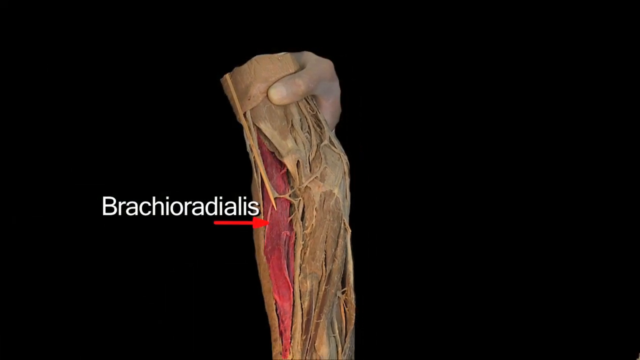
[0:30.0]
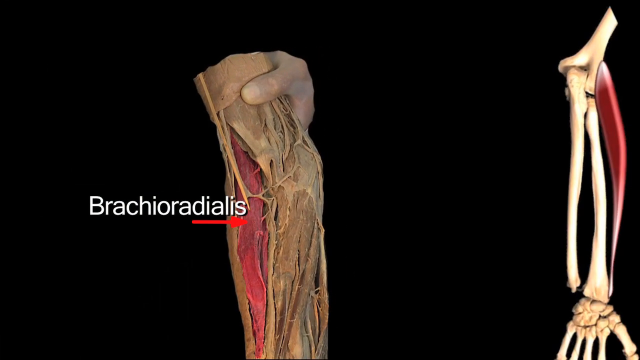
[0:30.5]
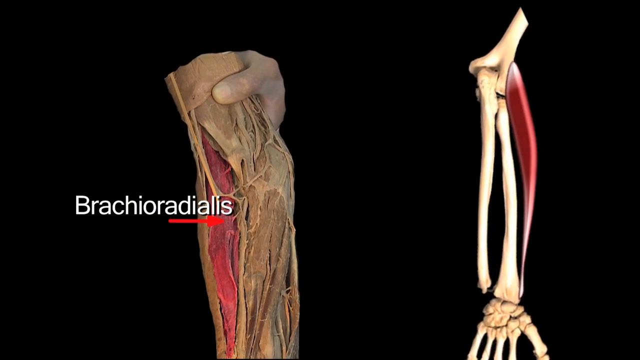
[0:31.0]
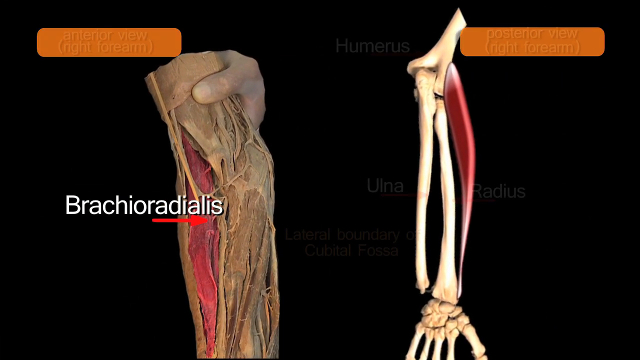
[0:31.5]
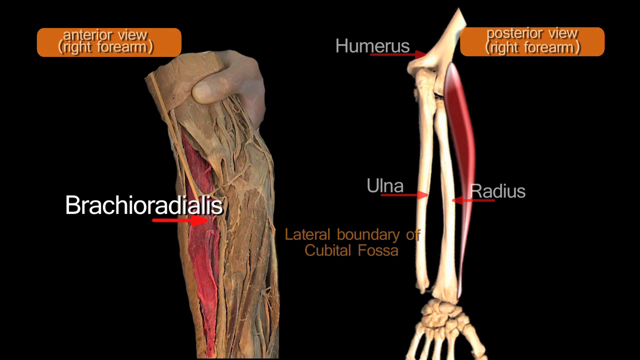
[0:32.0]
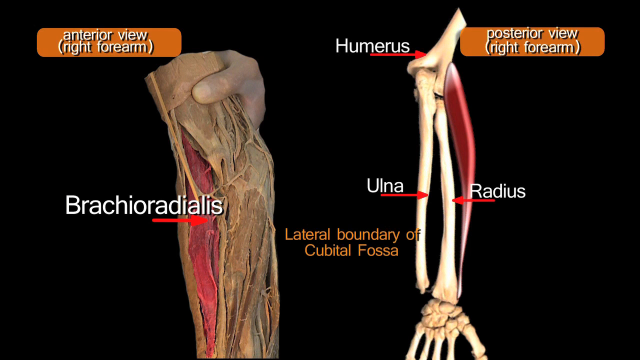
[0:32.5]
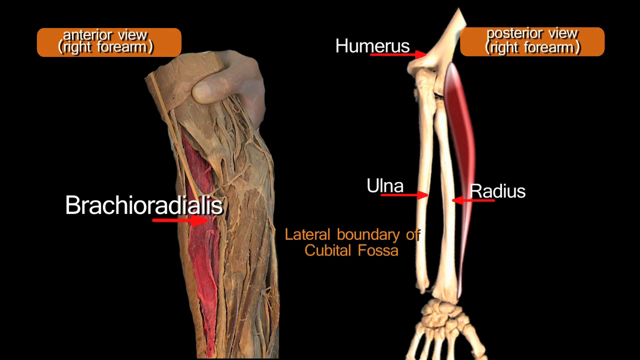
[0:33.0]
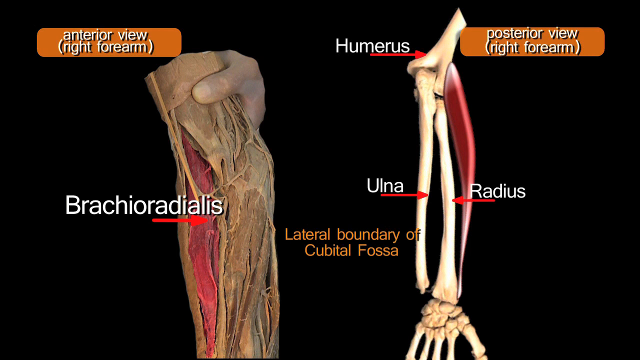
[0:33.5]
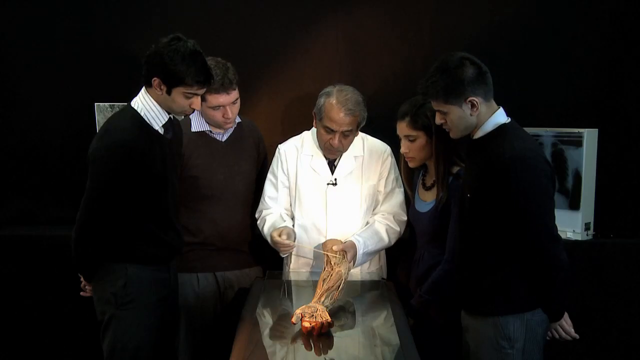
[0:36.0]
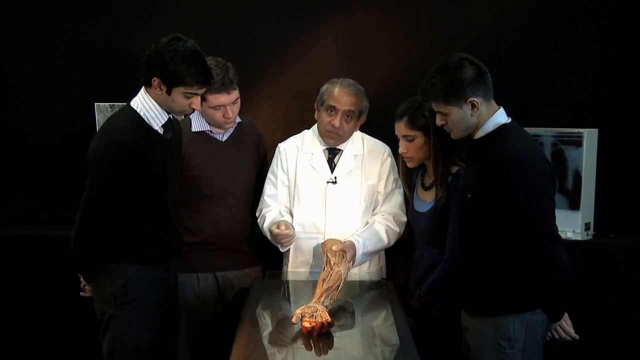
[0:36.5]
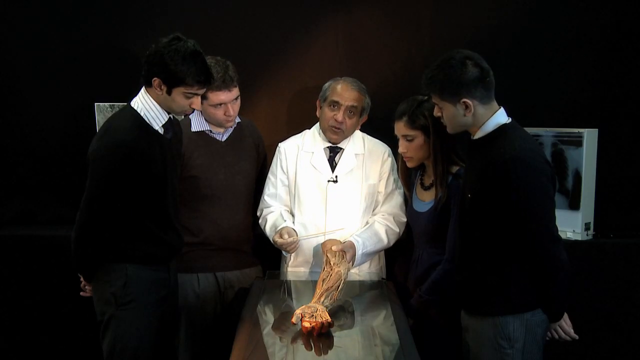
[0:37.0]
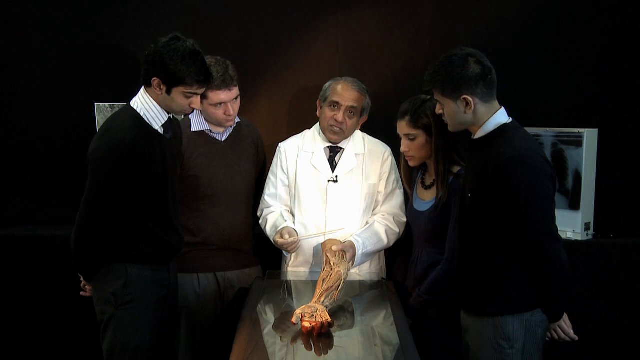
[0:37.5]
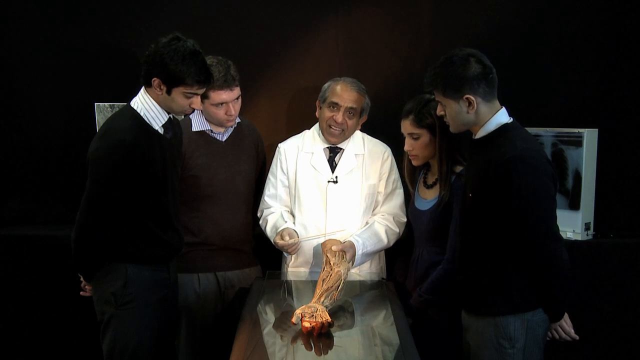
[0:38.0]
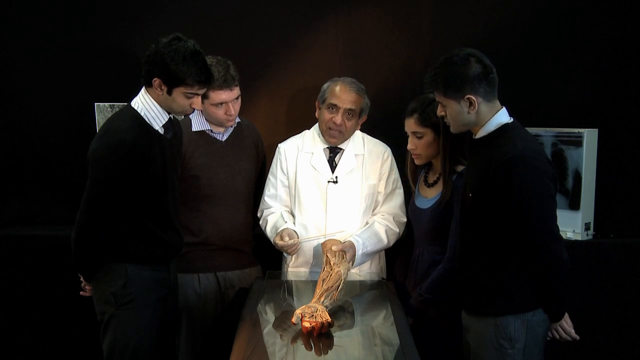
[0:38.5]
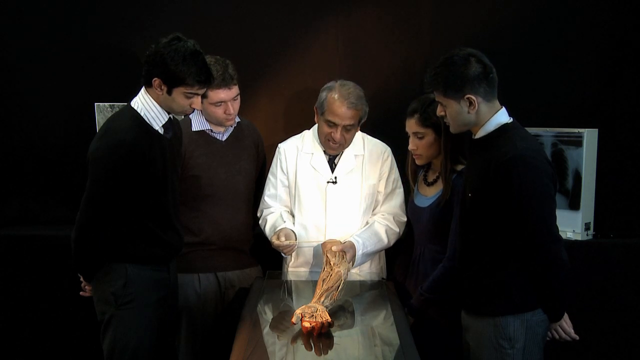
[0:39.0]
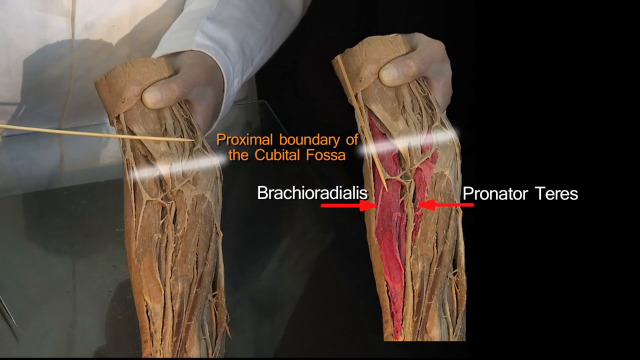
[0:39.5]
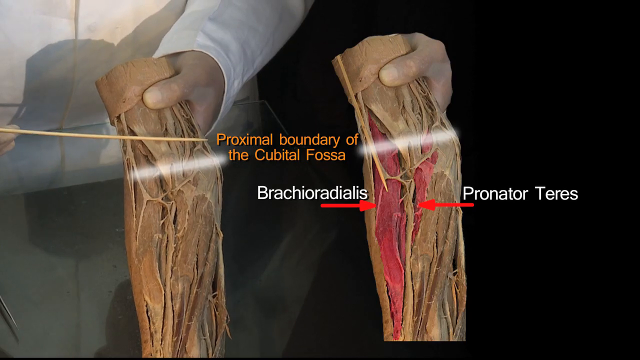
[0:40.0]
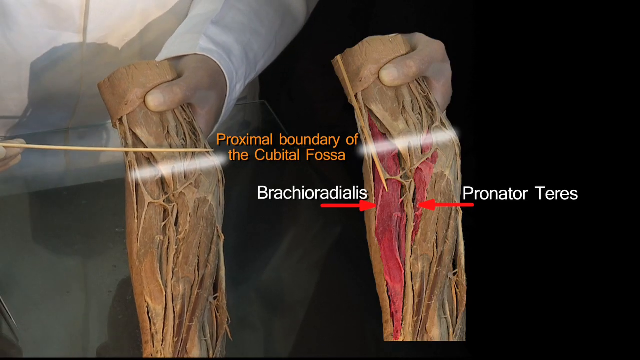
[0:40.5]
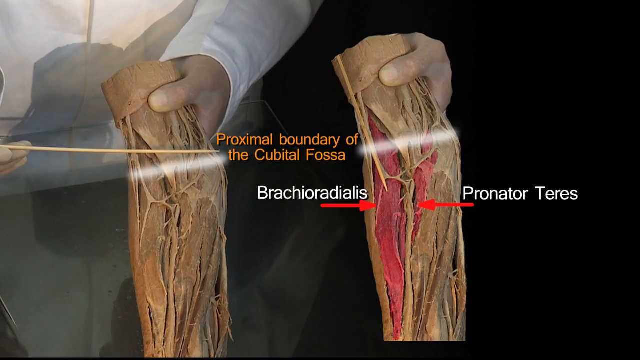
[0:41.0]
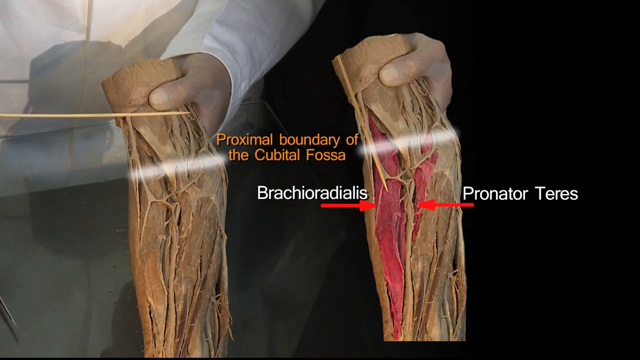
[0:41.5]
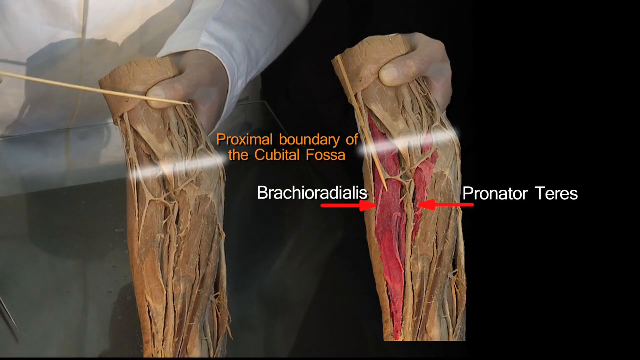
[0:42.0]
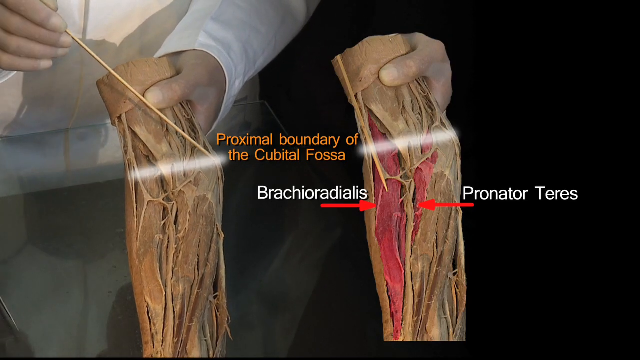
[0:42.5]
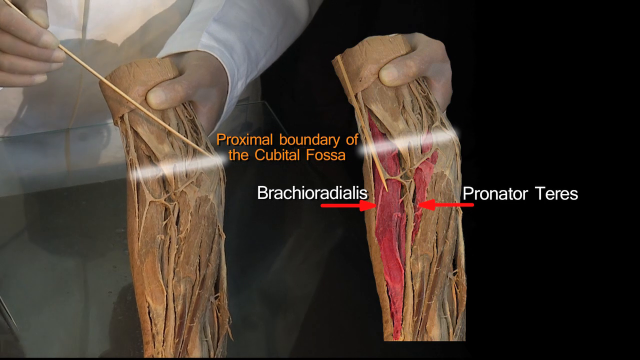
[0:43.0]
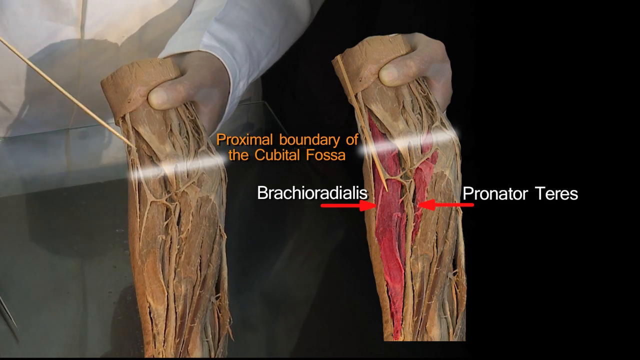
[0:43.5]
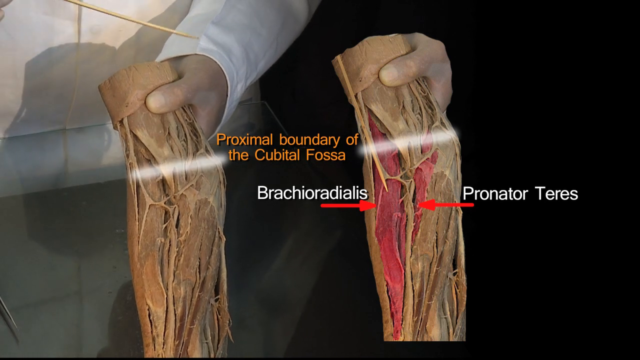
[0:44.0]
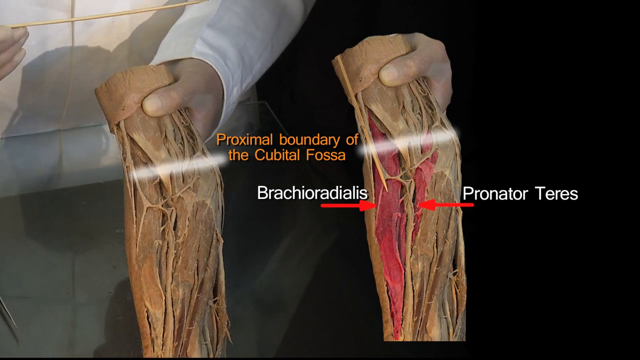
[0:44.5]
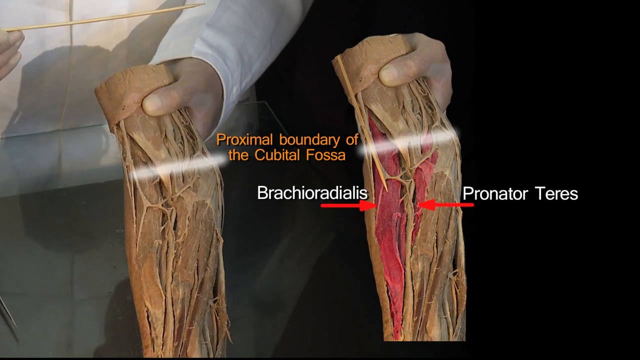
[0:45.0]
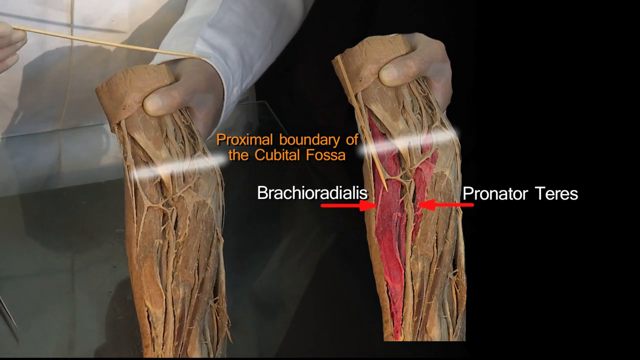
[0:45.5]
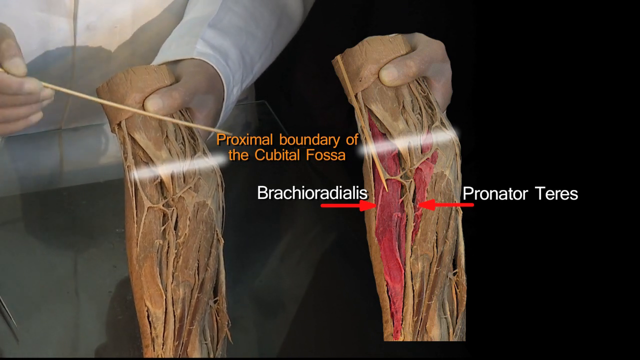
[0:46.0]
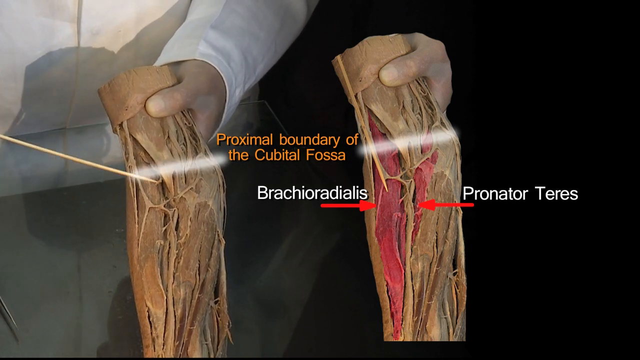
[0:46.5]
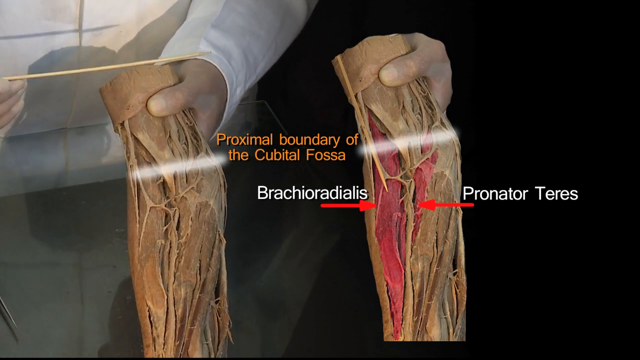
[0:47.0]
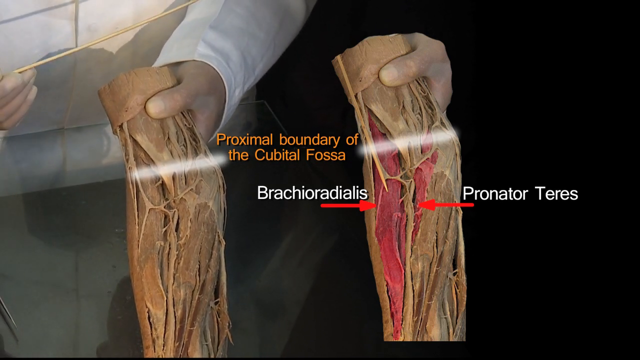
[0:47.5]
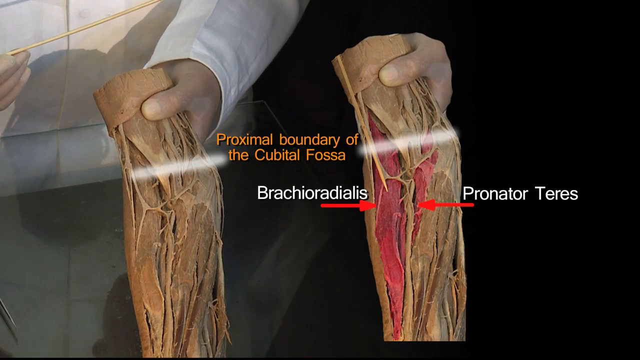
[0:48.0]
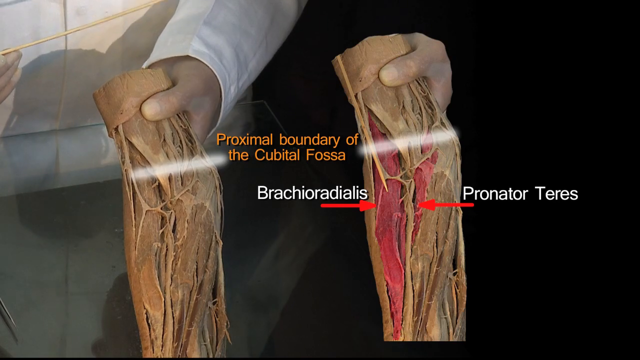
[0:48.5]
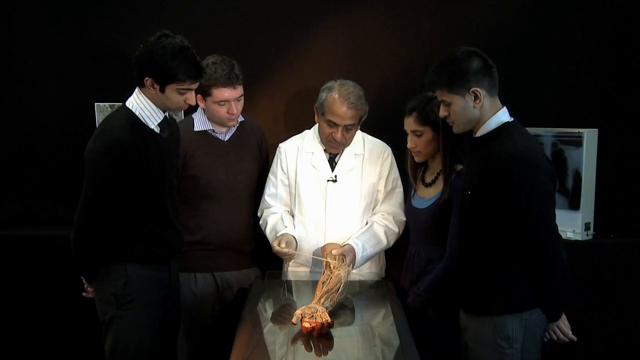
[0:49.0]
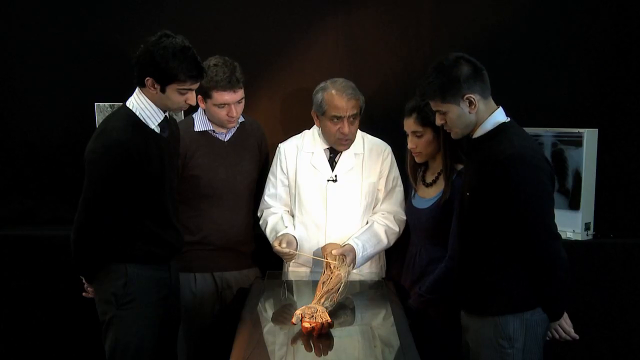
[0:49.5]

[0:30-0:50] Another part of the arm, the brachioradialis, is highlighted, and another image shows the arm from a different angle, again showing the humerus, ulna and radius along with the lateral boundary of the cubital fossa. The left image shows the anterior view of the right forearm and the right image shows the posterior view of the right forearm, with the brachioradialis also highlighted on the right. The professor speaks to the camera while four students look on and watch him. Another close-up of the arm shows the proximal boundary of the cubital fossa indicated with a white line, and next to it a still image of the arm highlights the pronator teres and the brachioradialis side by side.